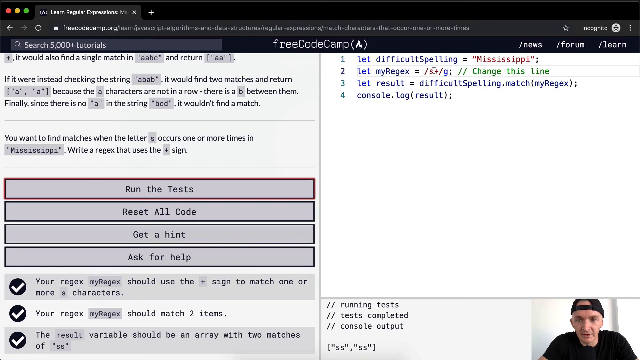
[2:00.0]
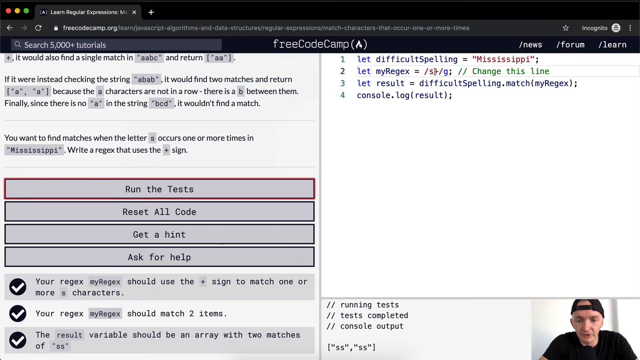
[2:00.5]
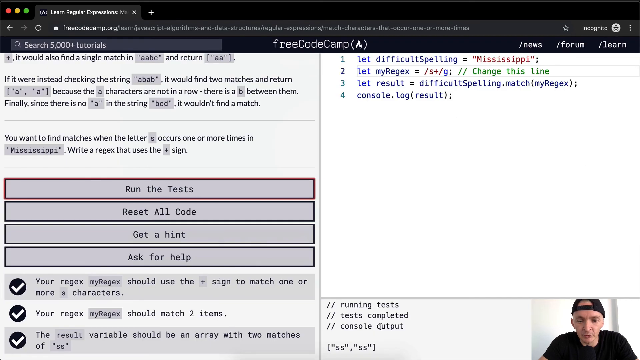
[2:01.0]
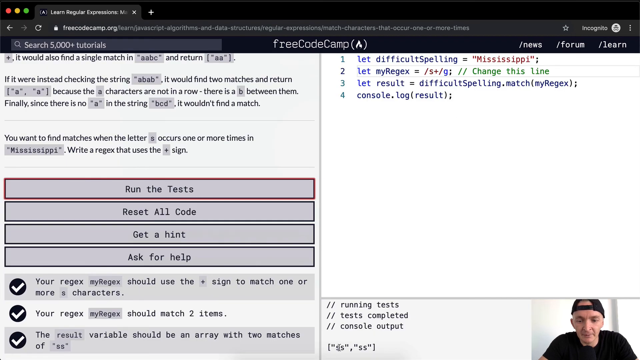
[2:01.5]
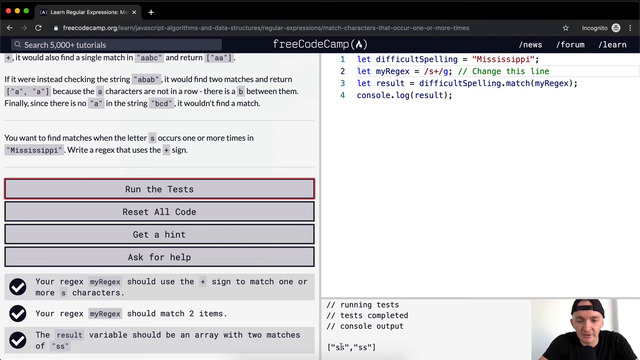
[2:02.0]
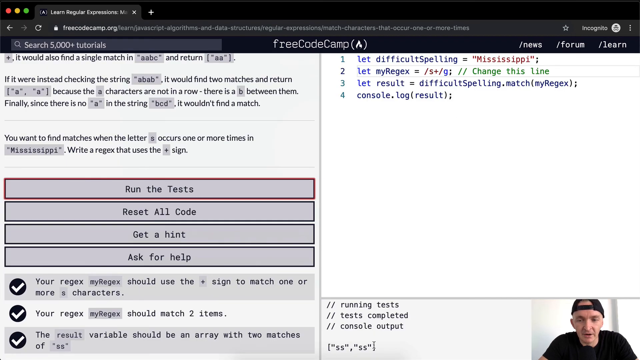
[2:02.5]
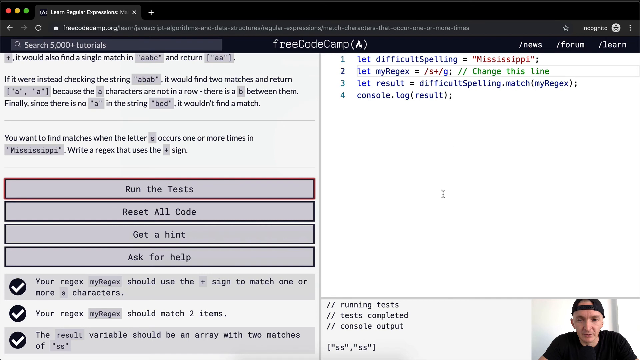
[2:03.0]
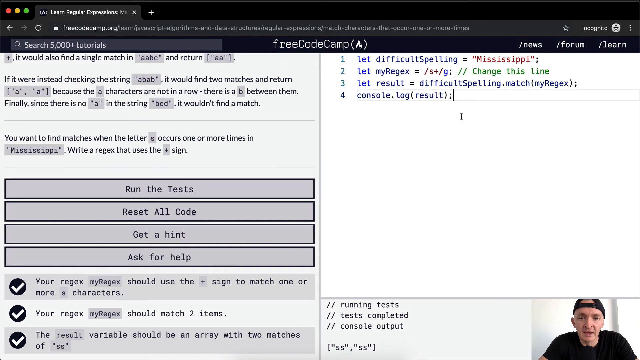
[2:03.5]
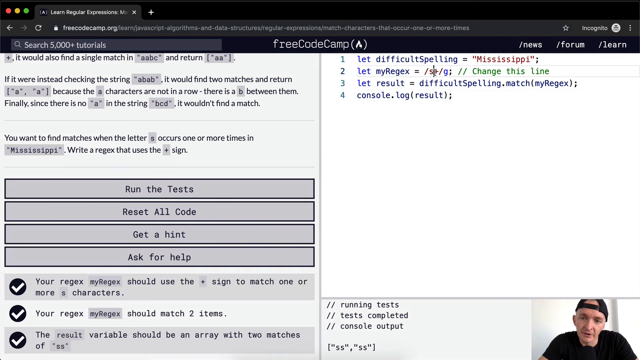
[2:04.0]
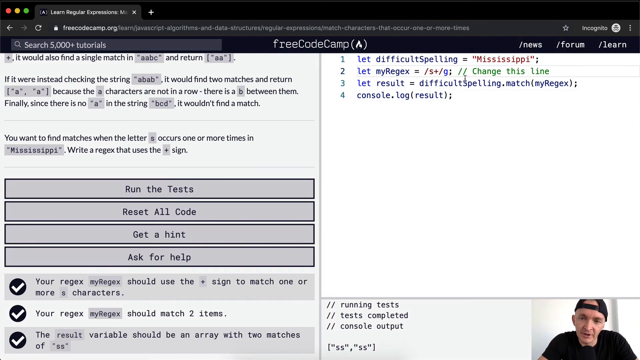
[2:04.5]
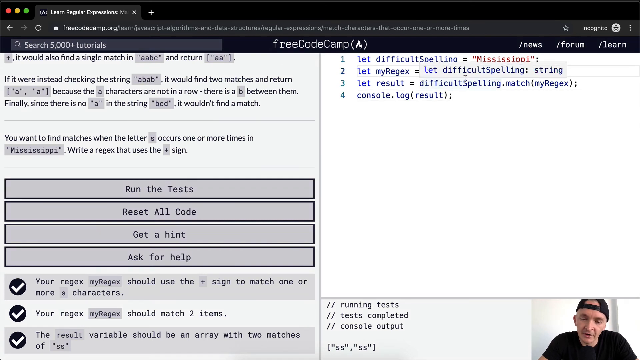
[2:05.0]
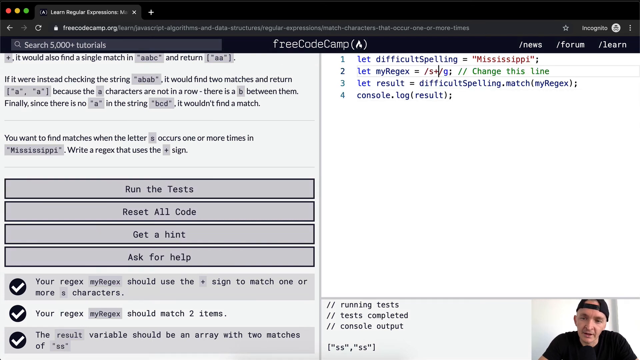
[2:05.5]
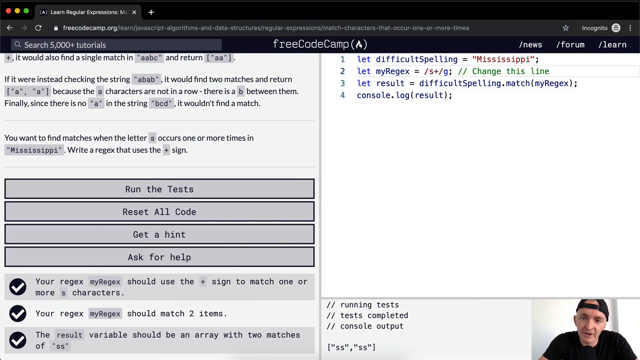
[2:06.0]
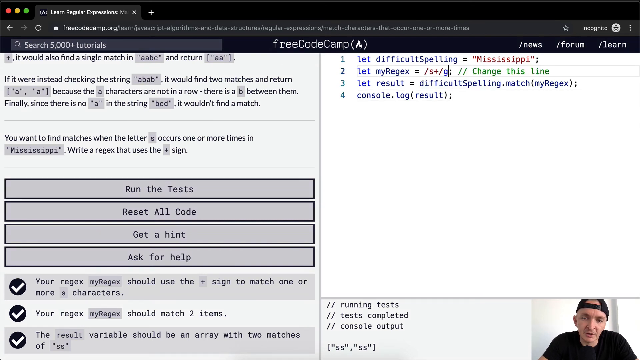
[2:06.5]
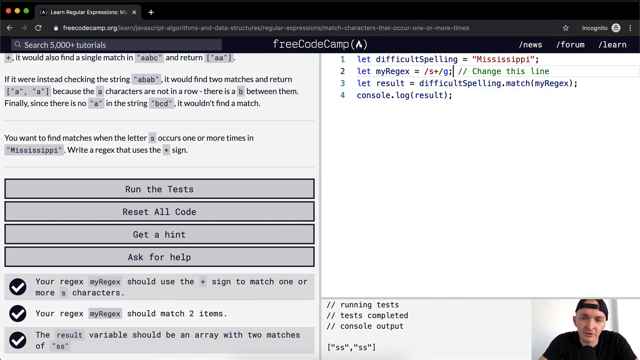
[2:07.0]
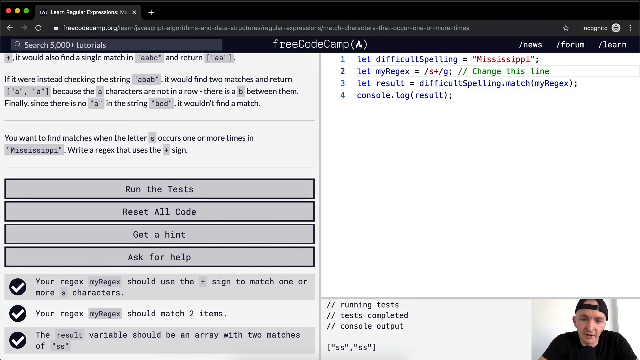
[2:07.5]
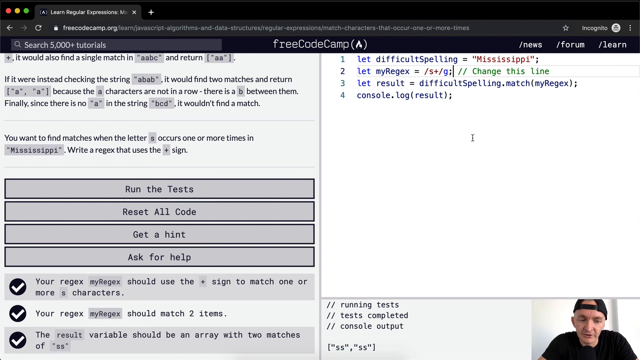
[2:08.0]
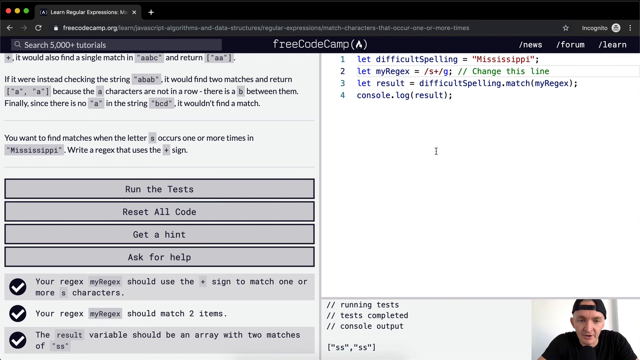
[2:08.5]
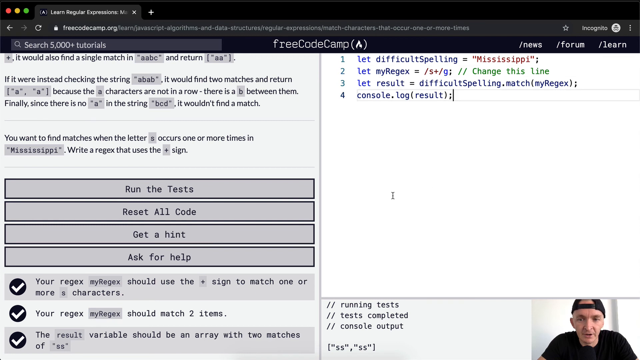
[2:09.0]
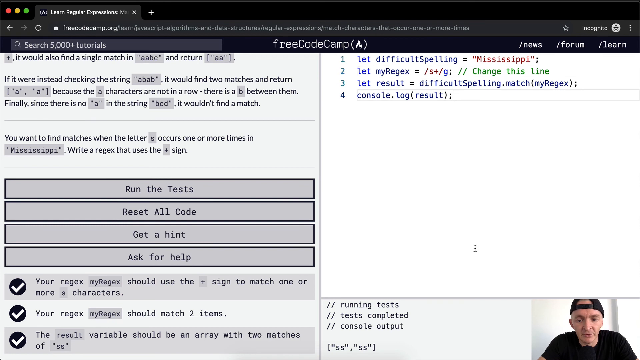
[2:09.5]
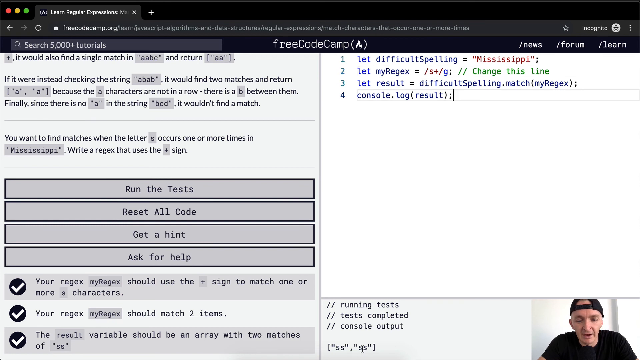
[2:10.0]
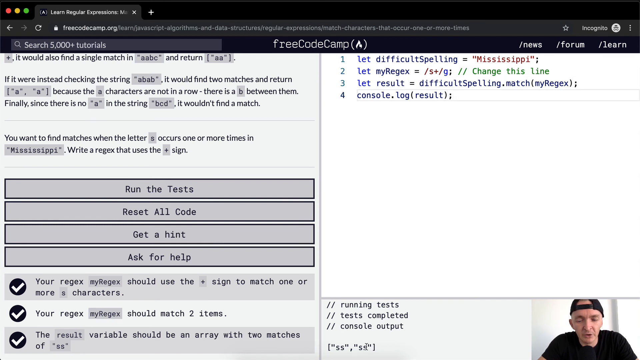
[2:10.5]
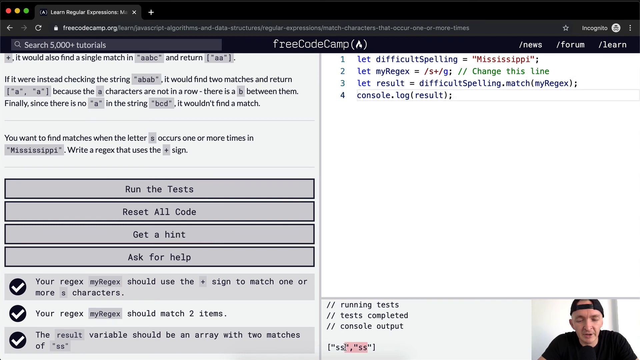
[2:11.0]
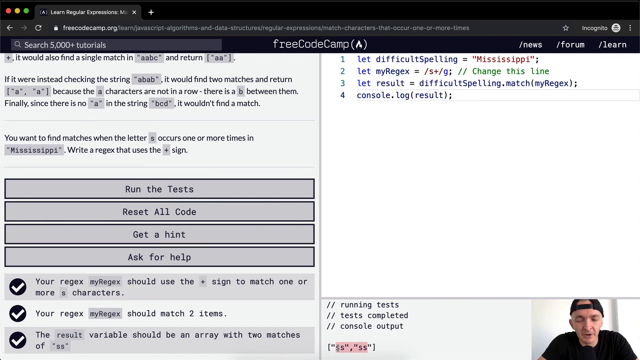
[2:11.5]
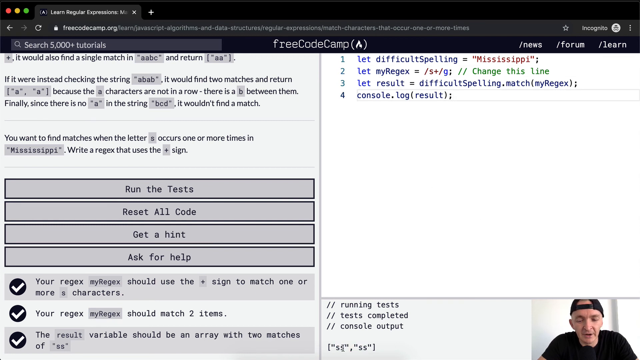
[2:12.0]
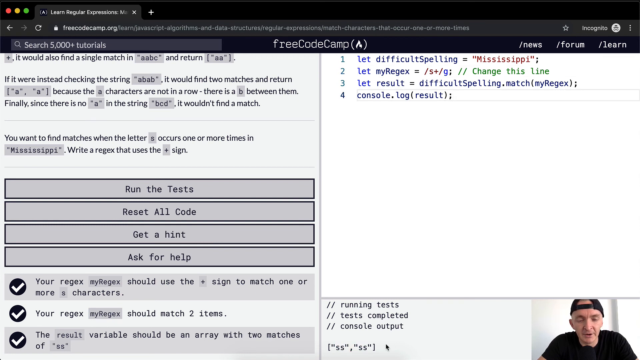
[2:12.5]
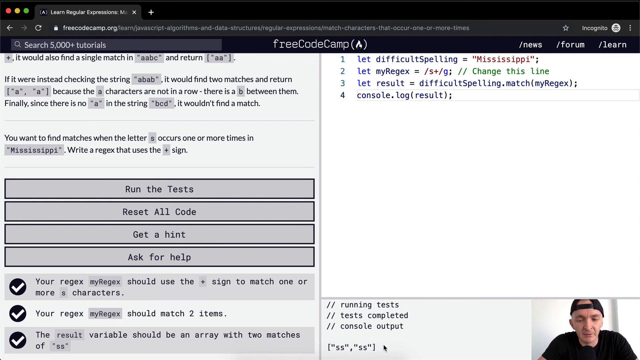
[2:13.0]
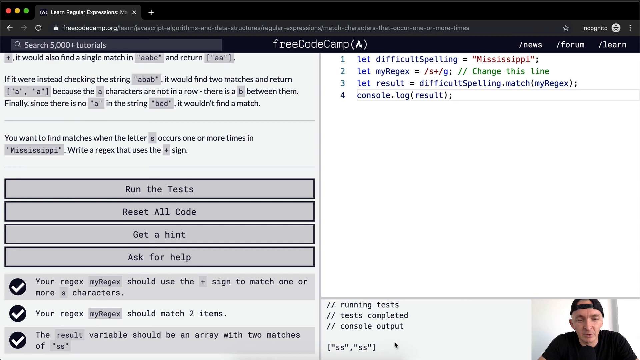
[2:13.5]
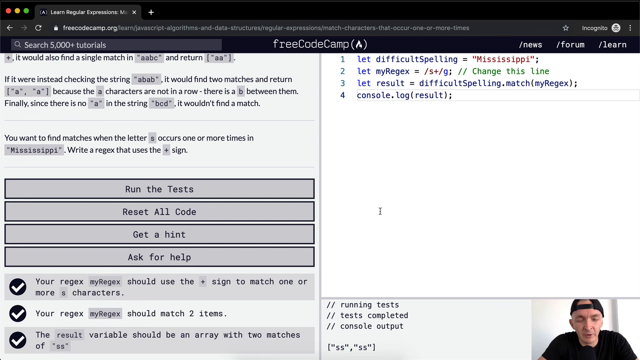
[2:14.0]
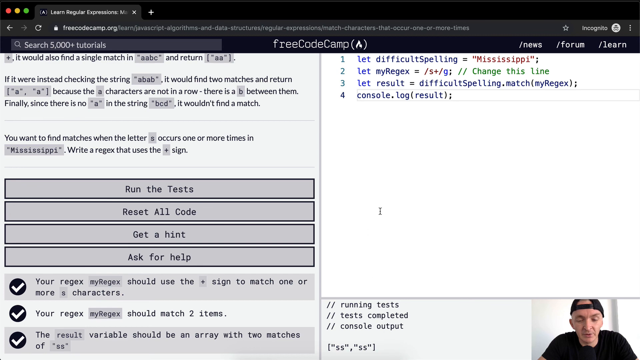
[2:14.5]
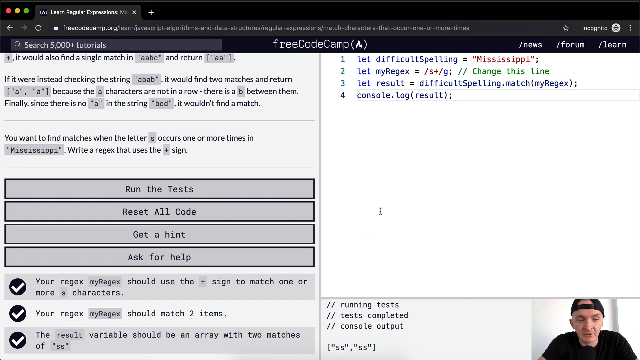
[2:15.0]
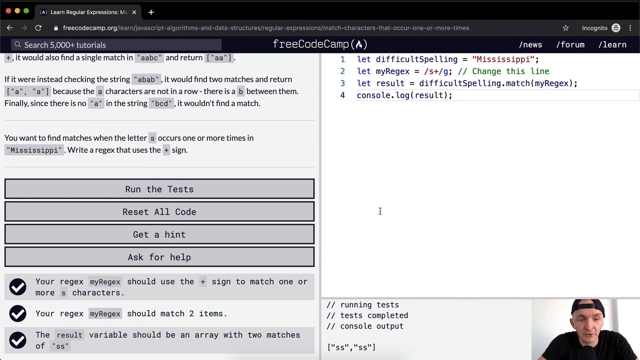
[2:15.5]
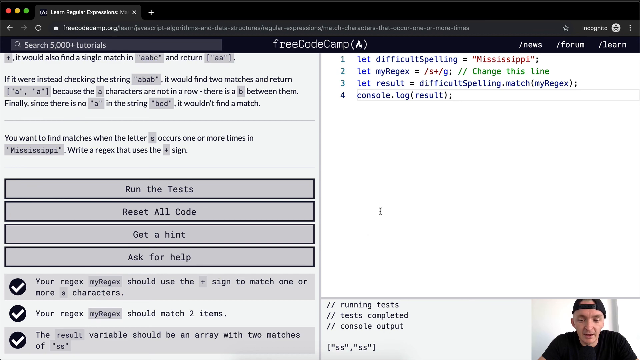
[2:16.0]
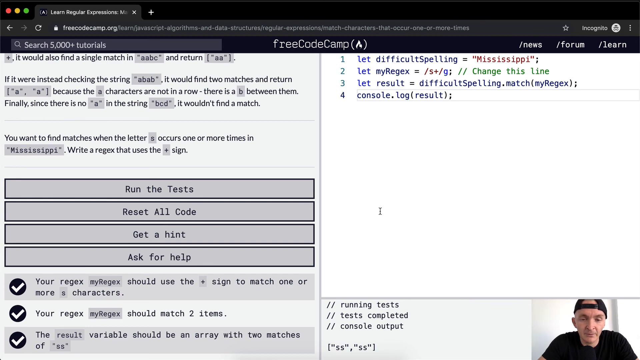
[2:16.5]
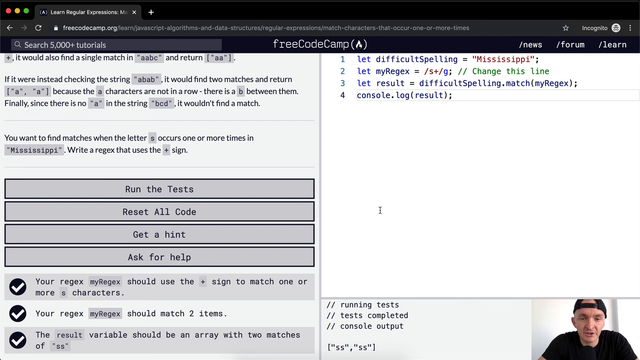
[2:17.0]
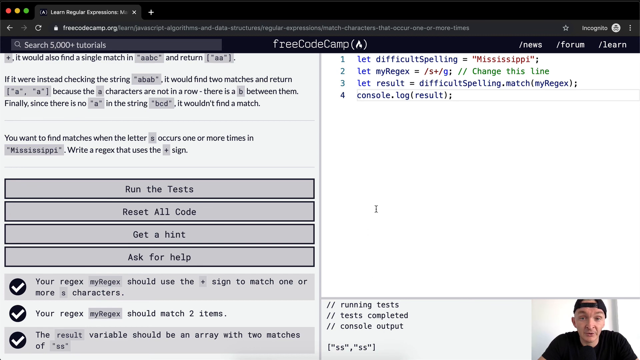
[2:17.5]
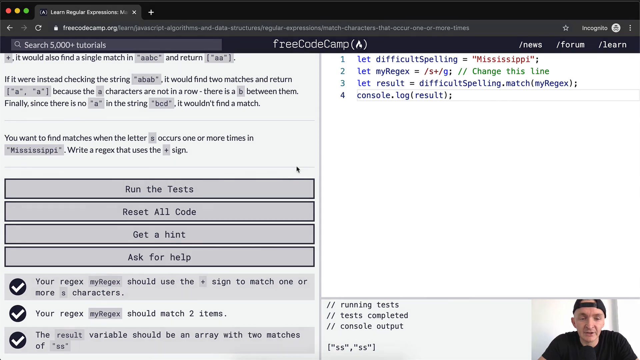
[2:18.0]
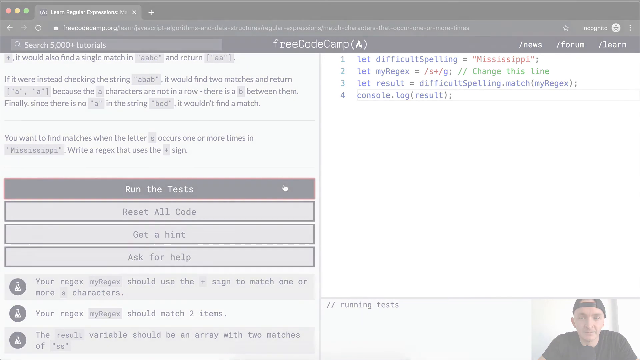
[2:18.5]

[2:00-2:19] The page is LearnFreeCodeCamp.org, and the top says "FreeCodeCamp" with an "A" in parentheses, with "Search 5000 Plus Tutorials" beside it. To the right are clickable categories: News, Forums and Learn. The main page is white and split down the center, with instructions on the left and a work console area on the right for writing code. The author narrates from a live feed at the bottom, wearing a black t-shirt and a black ball cap turned backwards. He moves the cursor around the screen one word at a time as he talks. Whenever he writes code into the console on the right, he quickly goes over to the left and highlights the corresponding instructions. Once his code is complete, he goes to "Run the Test" and shows that a check mark appears when the test runs properly.